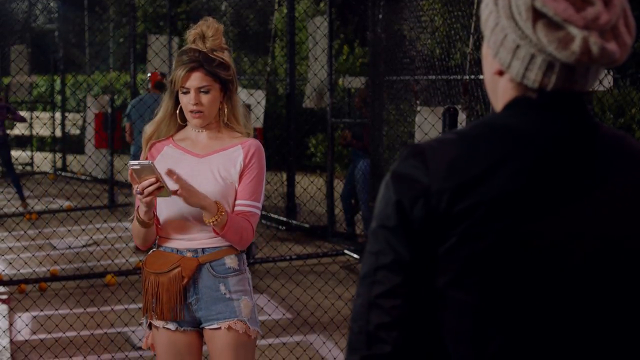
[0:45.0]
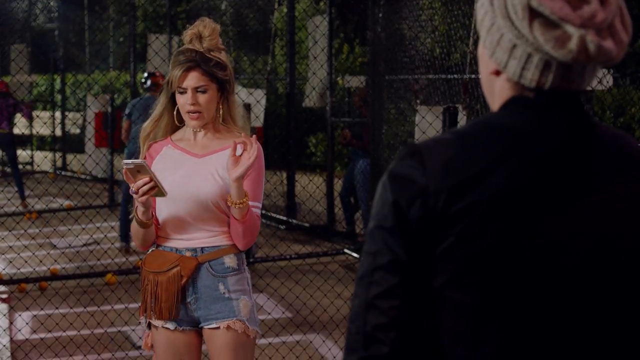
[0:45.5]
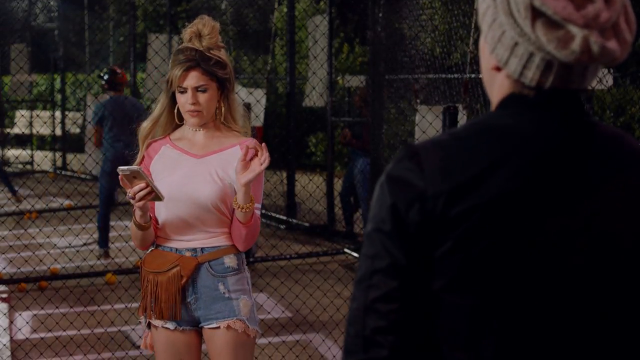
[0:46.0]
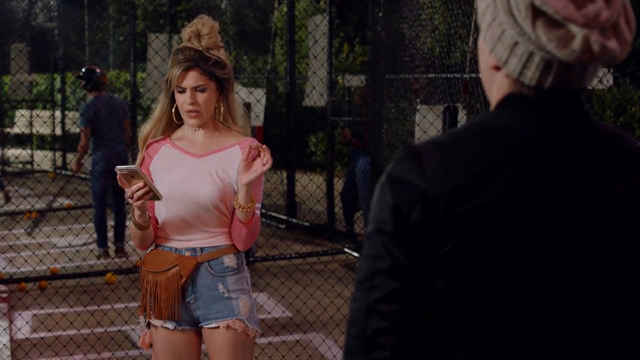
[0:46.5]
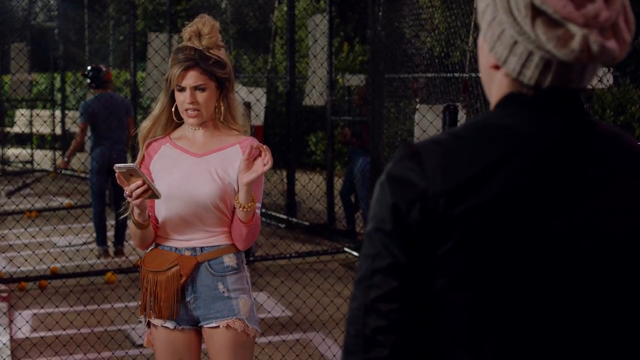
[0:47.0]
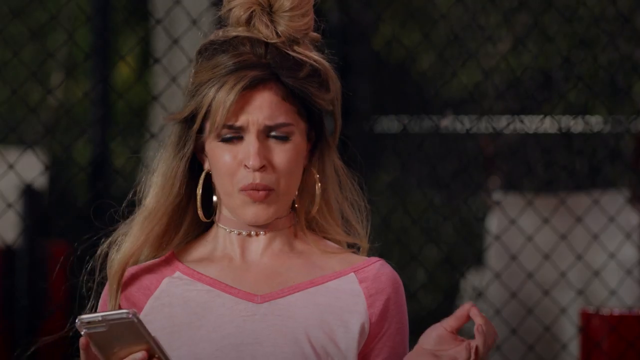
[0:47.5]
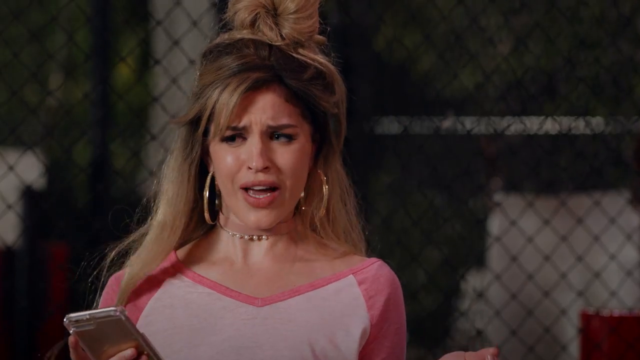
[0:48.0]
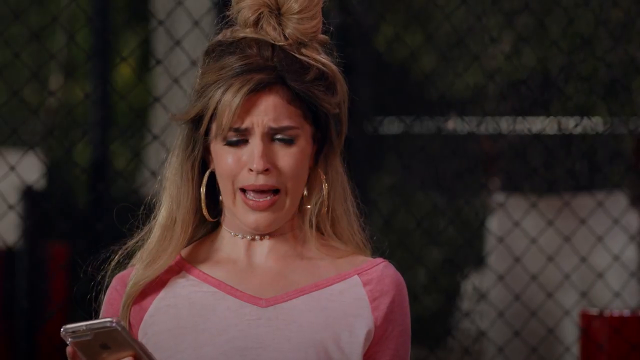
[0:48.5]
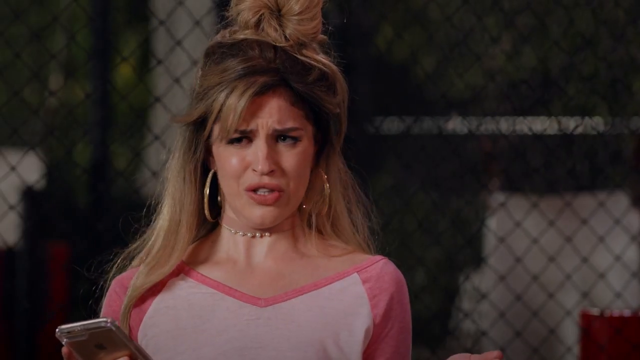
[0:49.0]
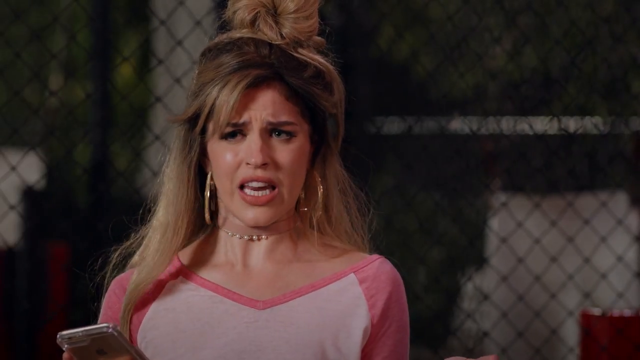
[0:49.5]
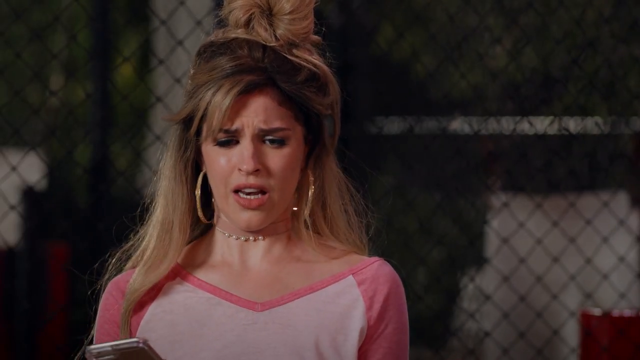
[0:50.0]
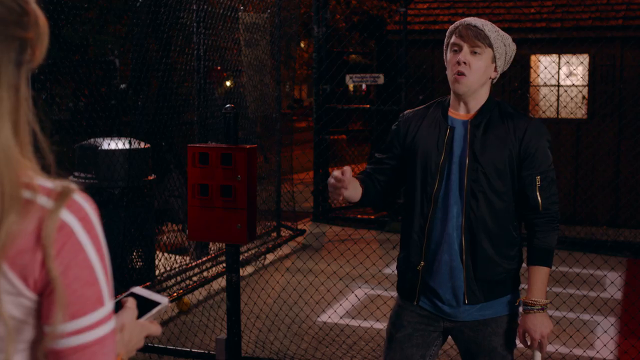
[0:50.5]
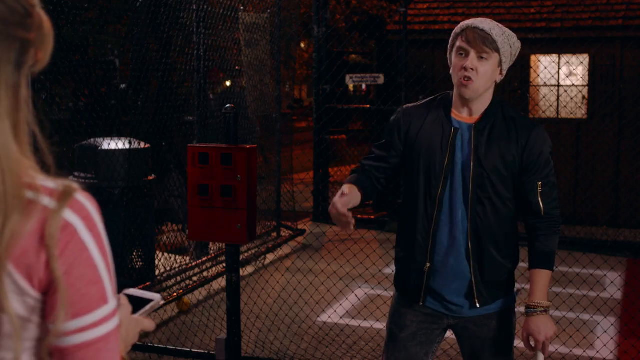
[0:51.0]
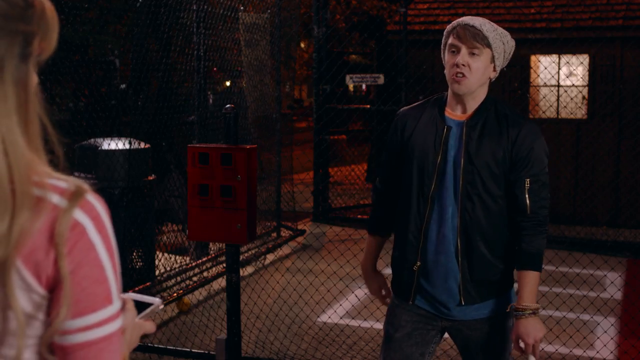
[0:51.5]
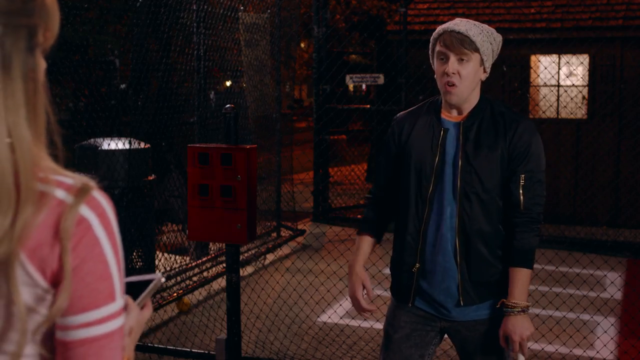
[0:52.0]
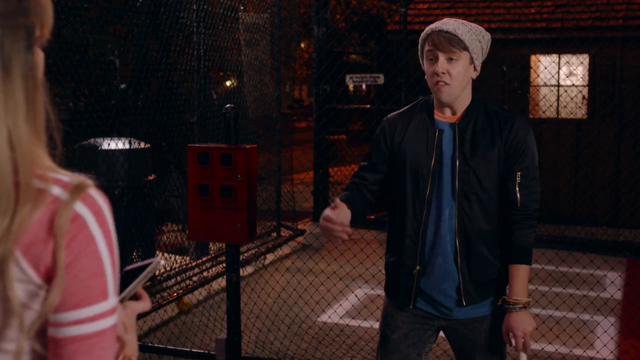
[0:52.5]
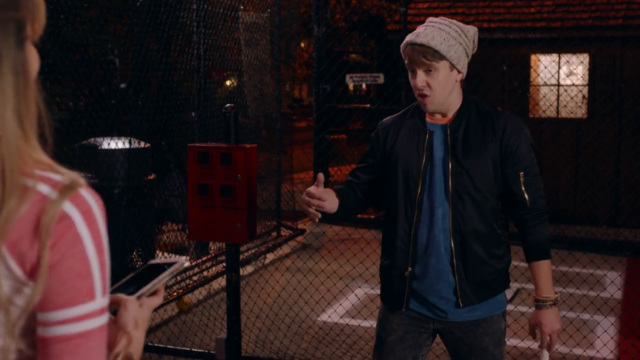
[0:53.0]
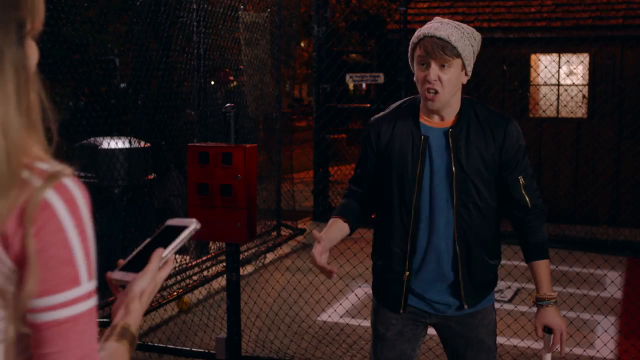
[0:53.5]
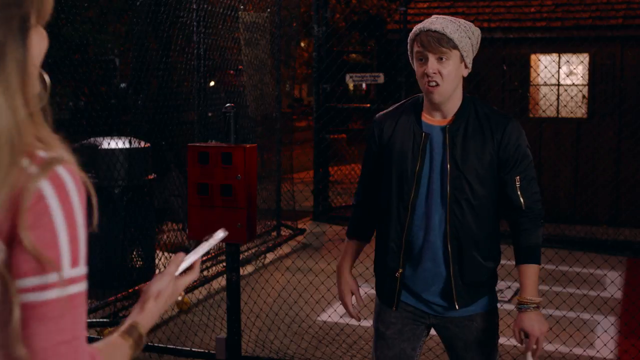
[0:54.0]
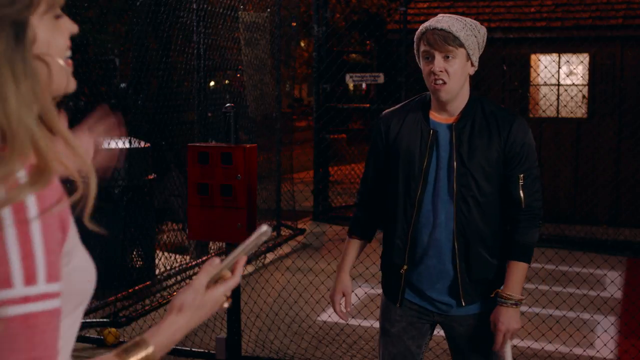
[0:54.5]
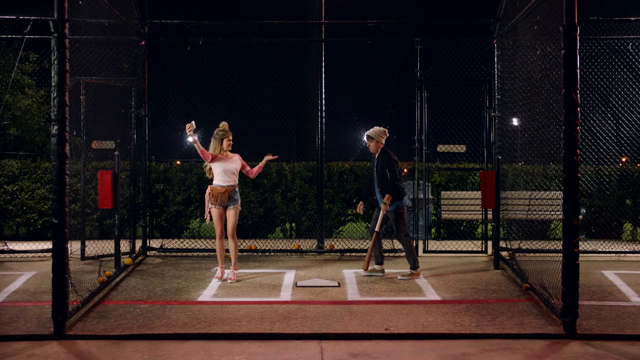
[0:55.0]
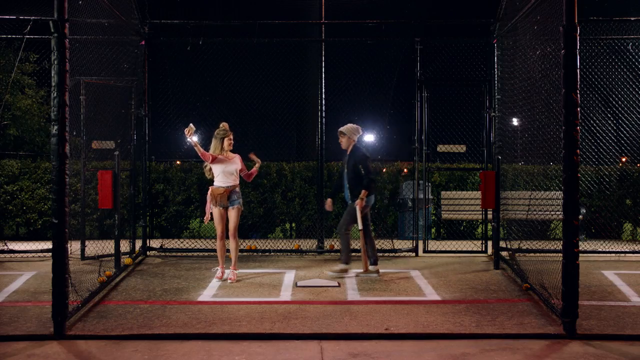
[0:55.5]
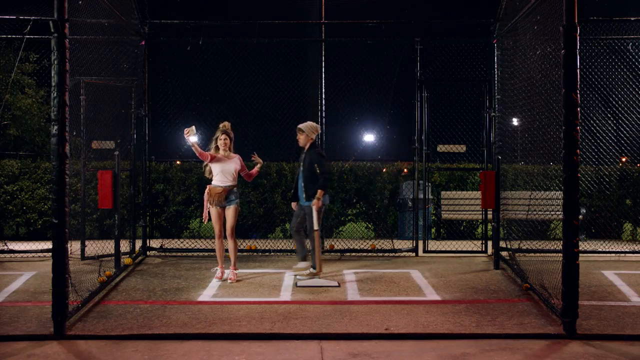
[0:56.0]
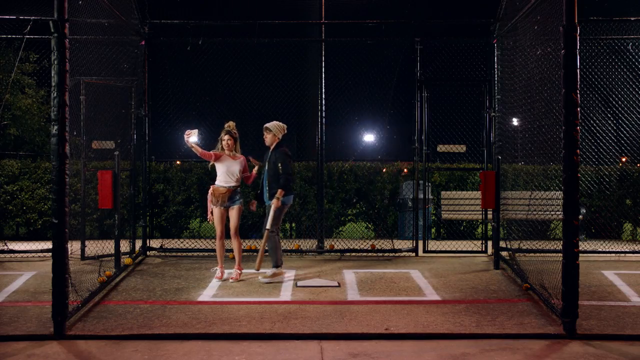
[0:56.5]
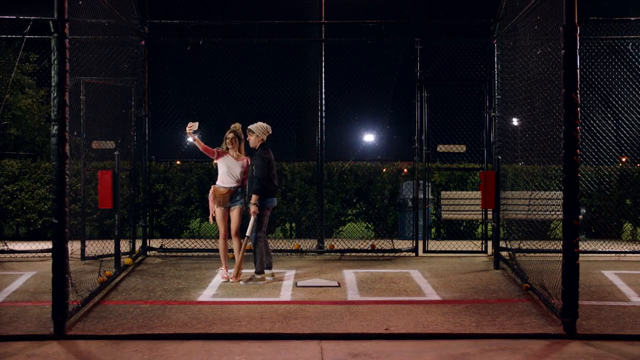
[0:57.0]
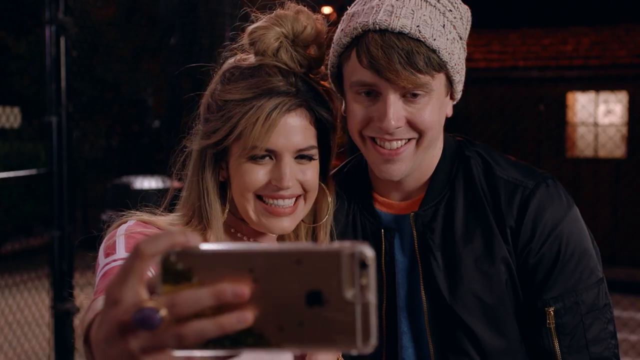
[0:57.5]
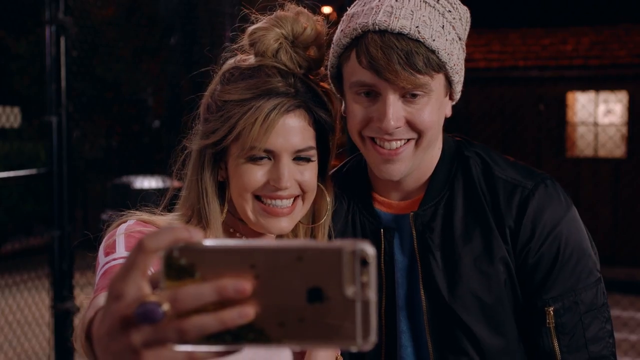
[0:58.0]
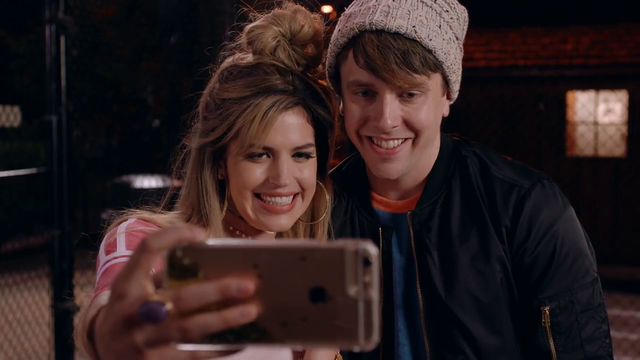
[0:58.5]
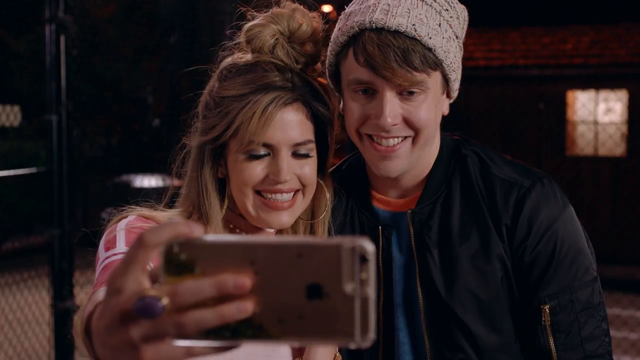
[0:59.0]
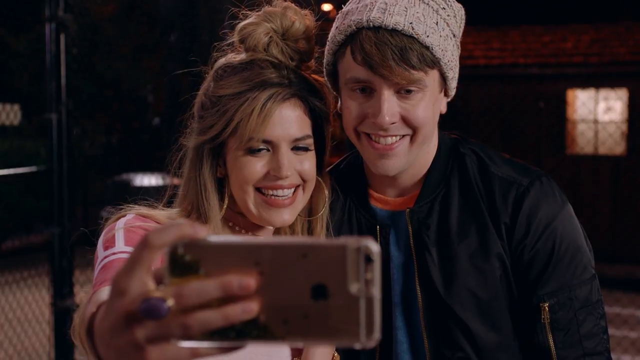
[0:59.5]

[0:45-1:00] A woman wears a sporty v-neck pink top with stripes on the sleeves, sort of a baseball shirt. She has big hoop earrings, blonde hair, a necklace and blue eyes. She looks at her phone and appears pretty annoyed, talking about something she is upset about, with a black chain-link fence behind her. The shot cuts to another view showing her back and a man wearing a jacket like a bomber jacket, a blue t-shirt, a winter cap and jeans. He responds to her, seeming very annoyed and upset, gesticulating with his hands. She starts waving him over, and the camera pulls back to reveal that they are in a batting cage. She wears cut-off shorts and has a big leather bag with a sort of leathery fringe, and wears either pink sneakers or pink heels; it is hard to tell. The batting cage is outdoors at night, with a row of hedges behind them and a couple of floodlamps in the background. As she waves him over, they get close to each other for a selfie and are suddenly smiling, appearing very happy as she takes the selfie.